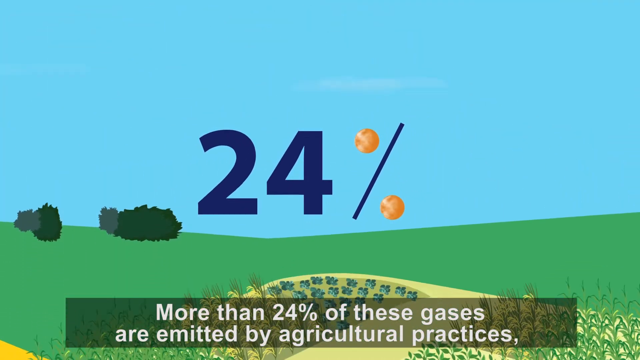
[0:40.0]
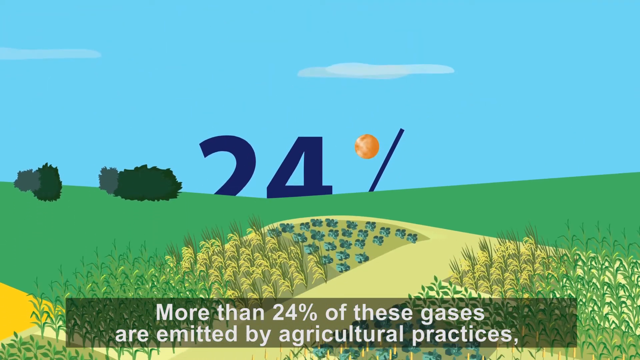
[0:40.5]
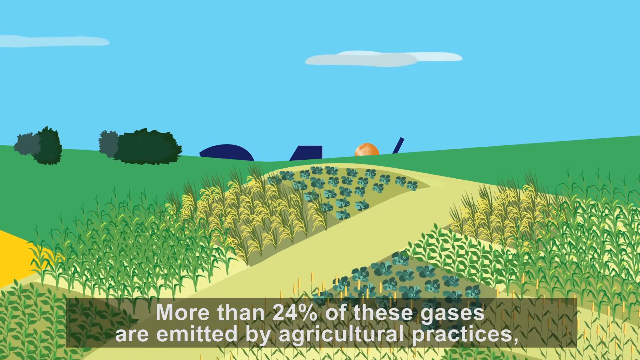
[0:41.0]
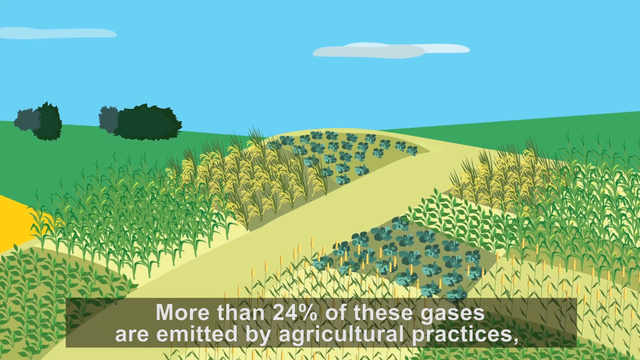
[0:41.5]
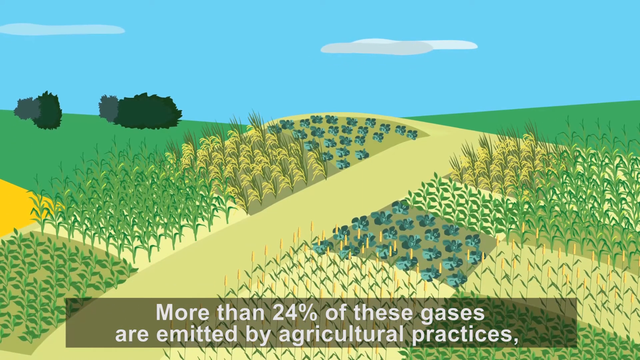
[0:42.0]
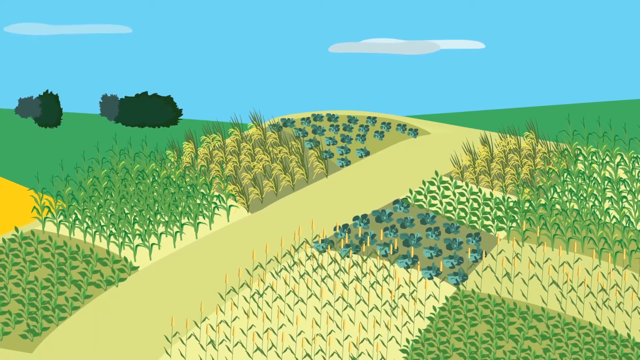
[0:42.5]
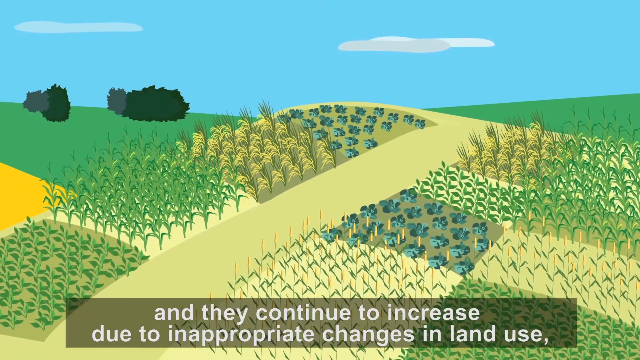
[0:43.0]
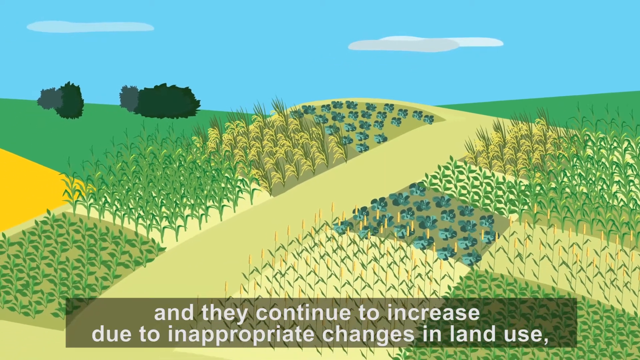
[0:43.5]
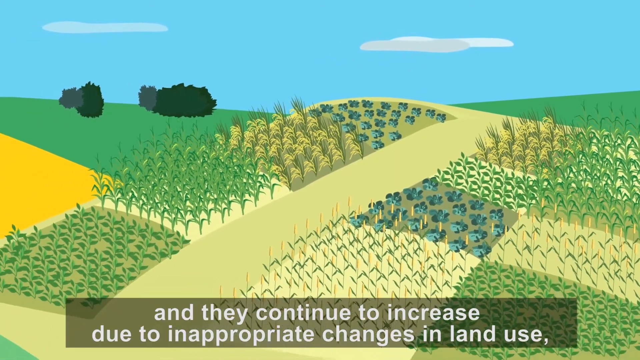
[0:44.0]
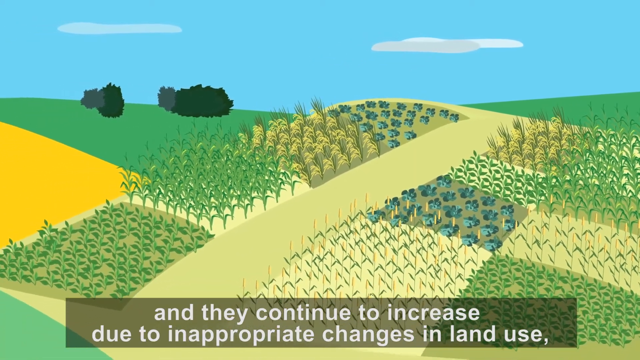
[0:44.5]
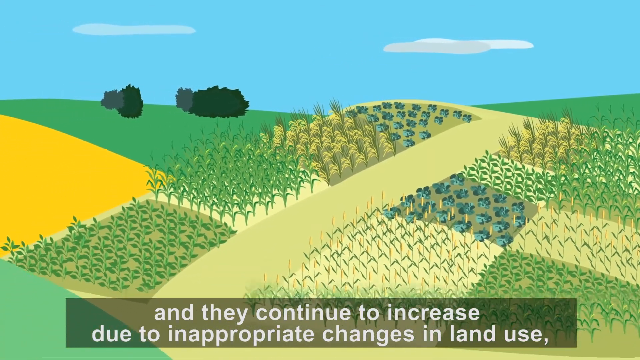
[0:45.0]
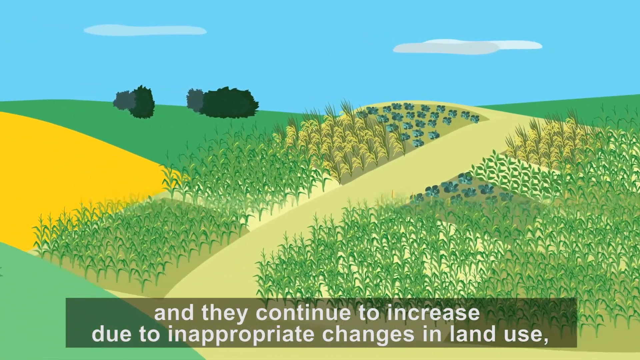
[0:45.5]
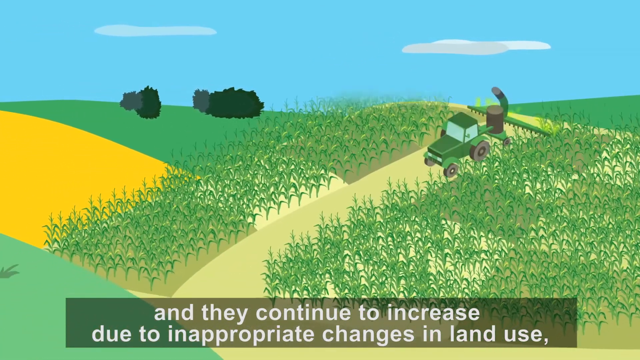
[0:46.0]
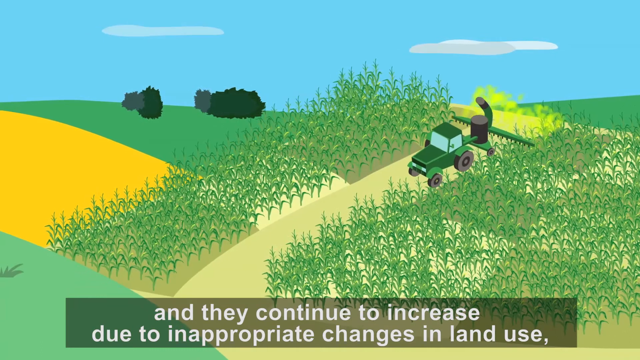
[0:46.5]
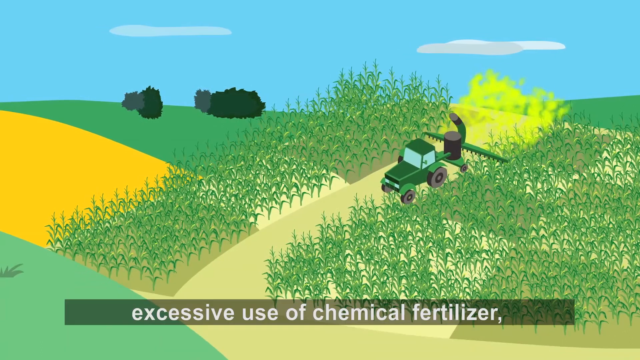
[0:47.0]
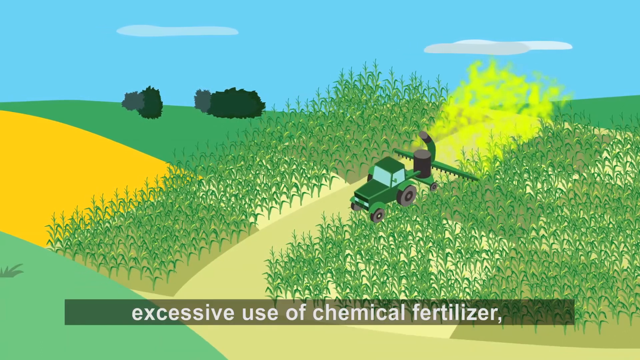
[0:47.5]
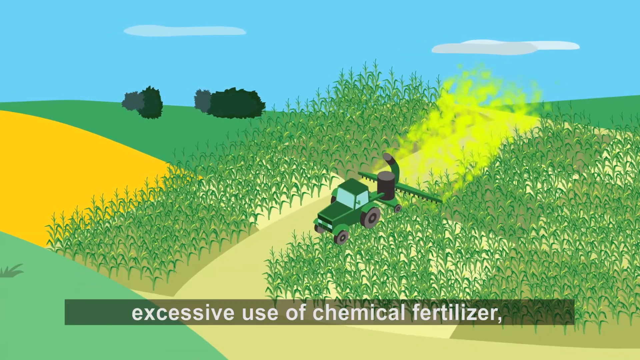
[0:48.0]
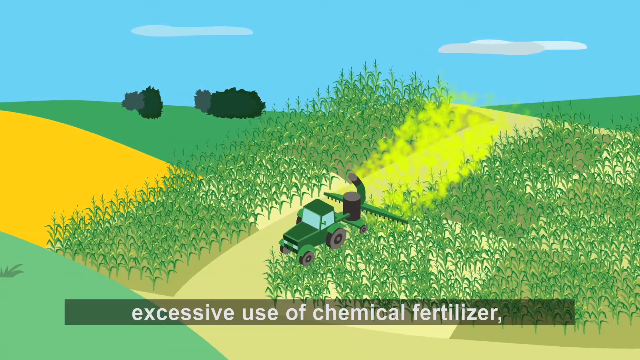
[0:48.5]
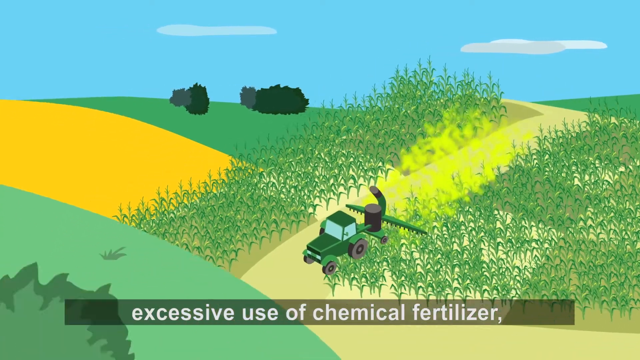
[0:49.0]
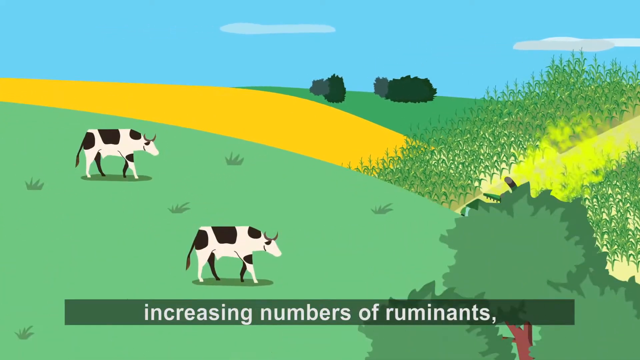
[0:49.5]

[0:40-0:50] "24%" appears in blue, and white text at the bottom reads "more than 24% of these gases" emitted "by agricultural practices" while farmland is shown. Text continues "and they continue to increase due to inappropriate changes in land", mentioning "excessive use of chemical fertilizers" and "ruminants". Cows then appear on the left side of the screen.